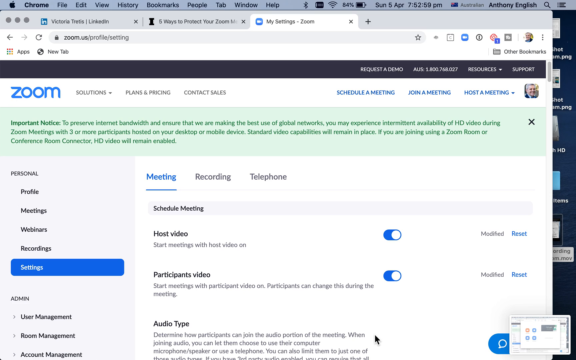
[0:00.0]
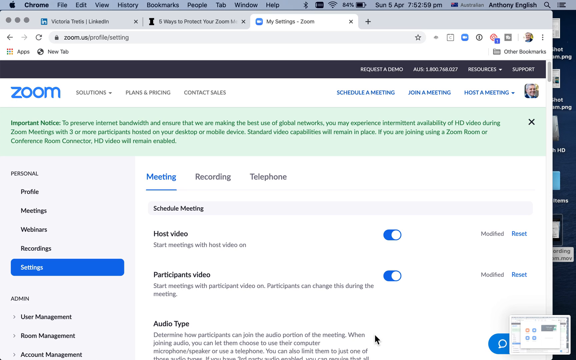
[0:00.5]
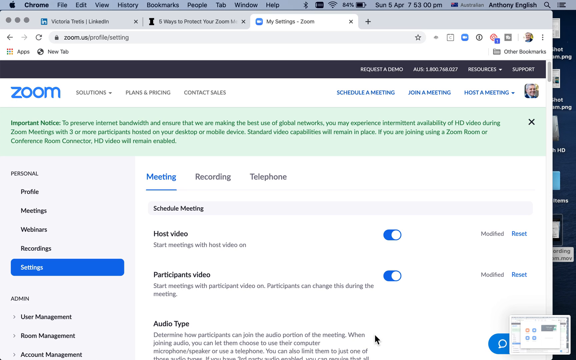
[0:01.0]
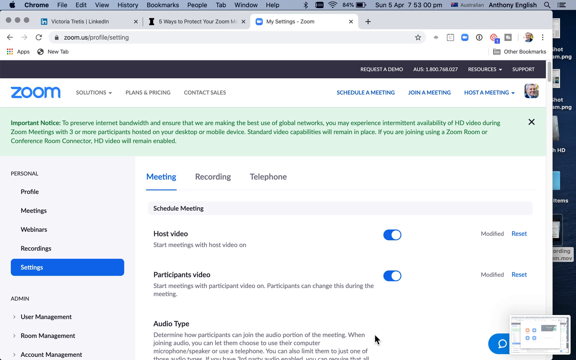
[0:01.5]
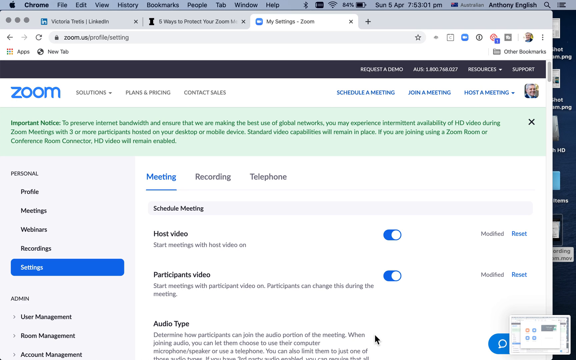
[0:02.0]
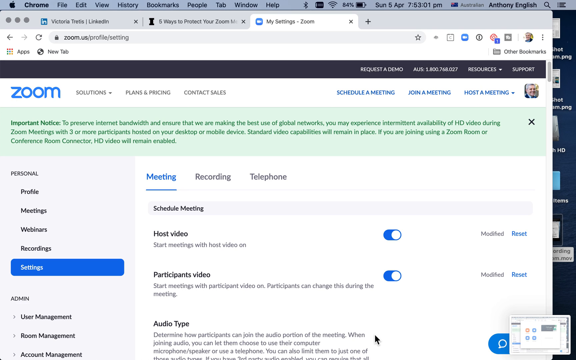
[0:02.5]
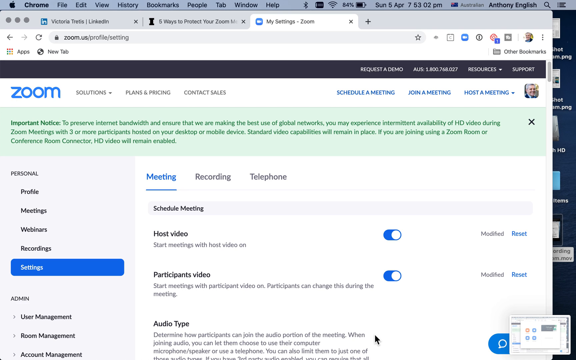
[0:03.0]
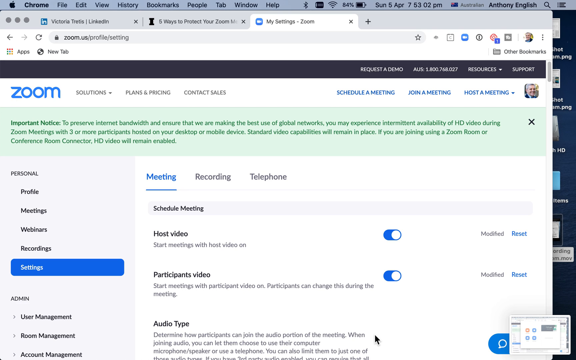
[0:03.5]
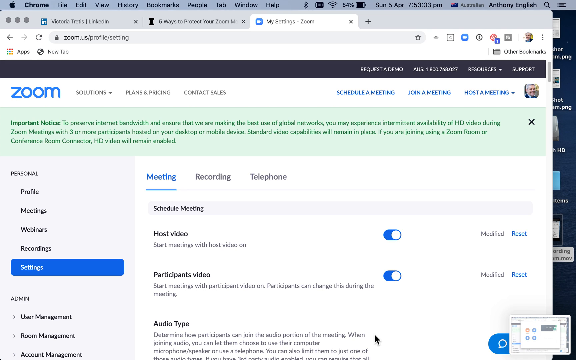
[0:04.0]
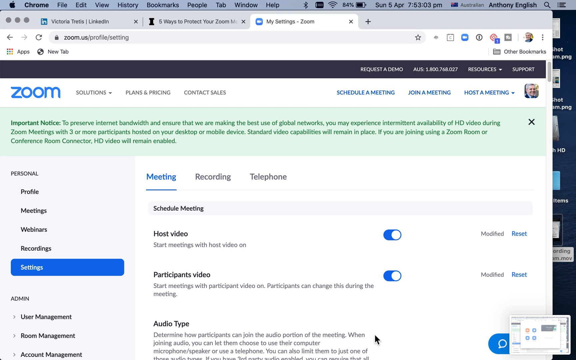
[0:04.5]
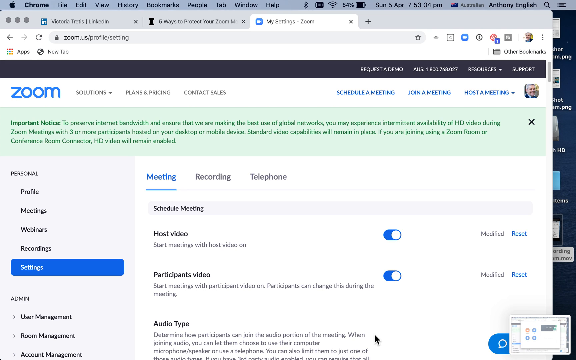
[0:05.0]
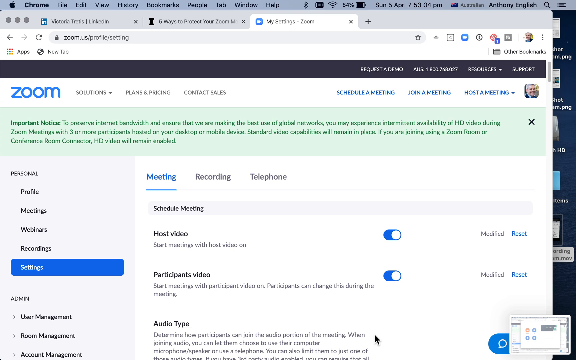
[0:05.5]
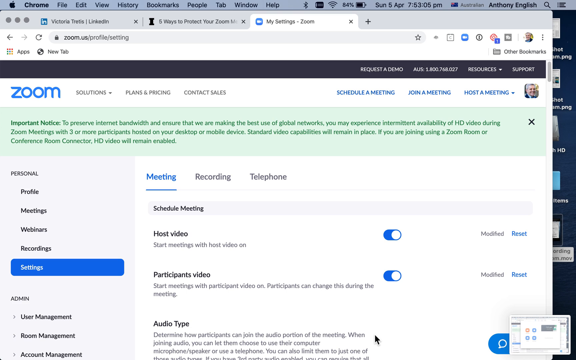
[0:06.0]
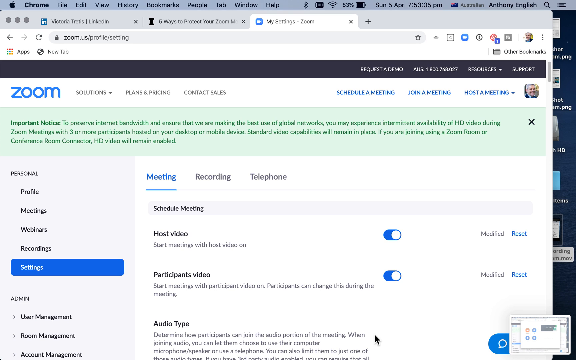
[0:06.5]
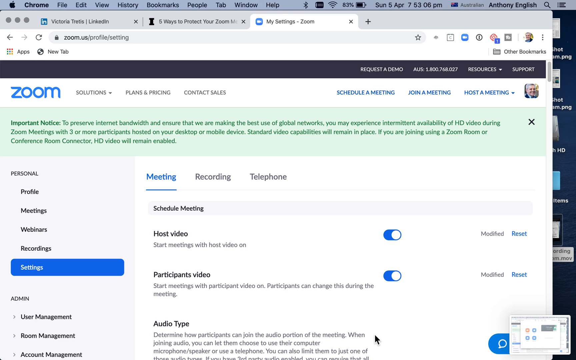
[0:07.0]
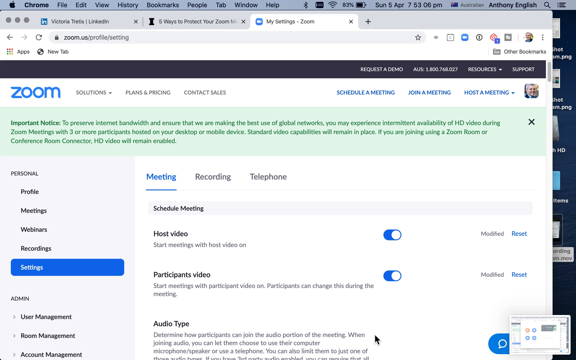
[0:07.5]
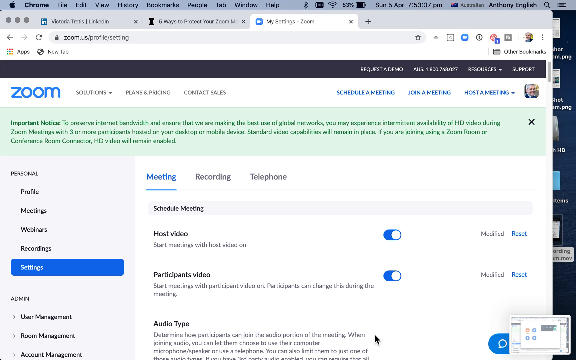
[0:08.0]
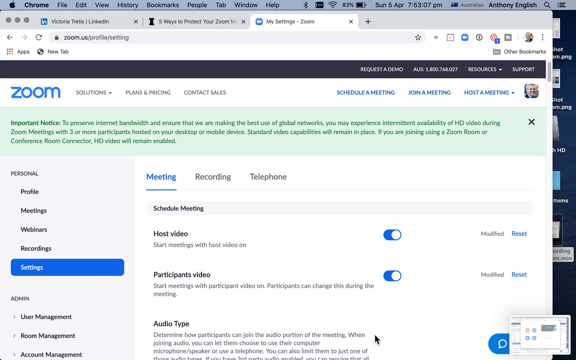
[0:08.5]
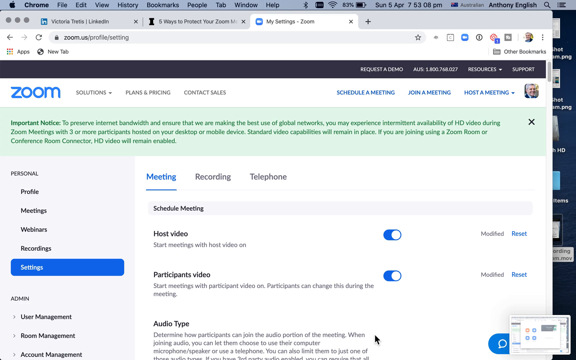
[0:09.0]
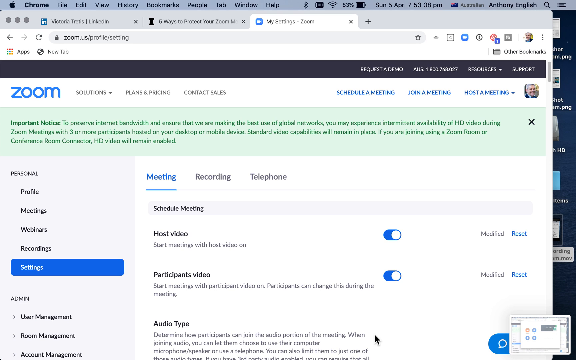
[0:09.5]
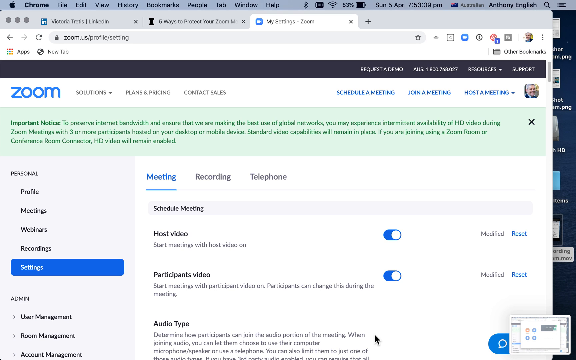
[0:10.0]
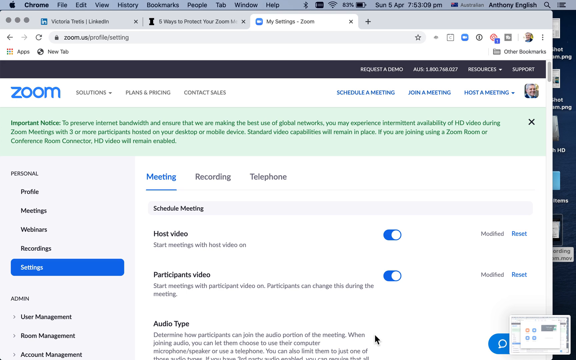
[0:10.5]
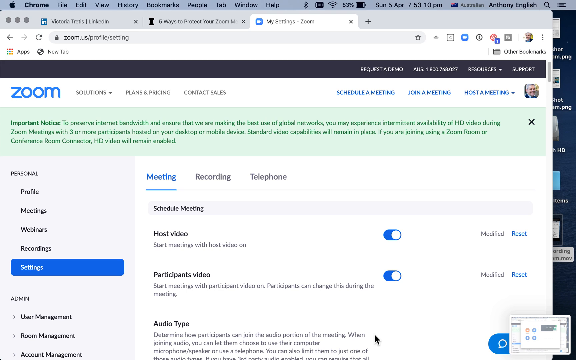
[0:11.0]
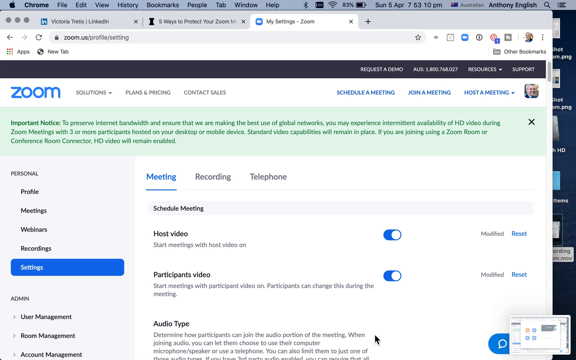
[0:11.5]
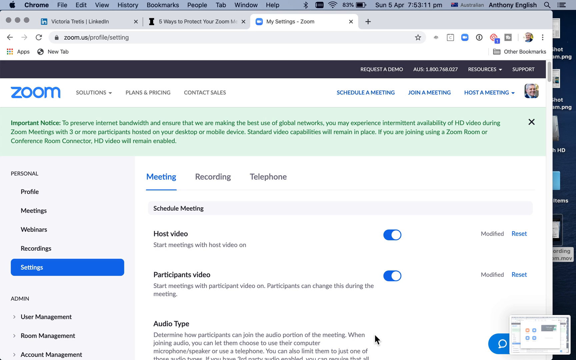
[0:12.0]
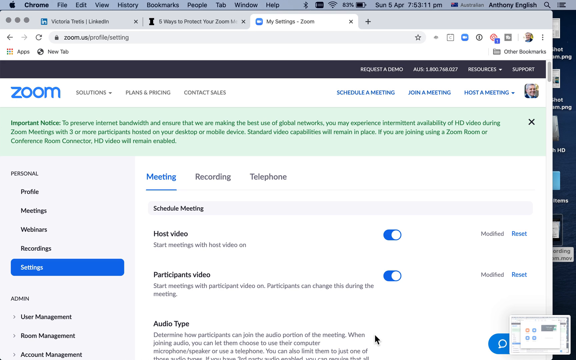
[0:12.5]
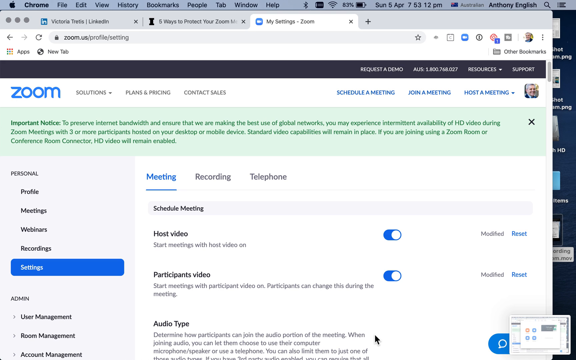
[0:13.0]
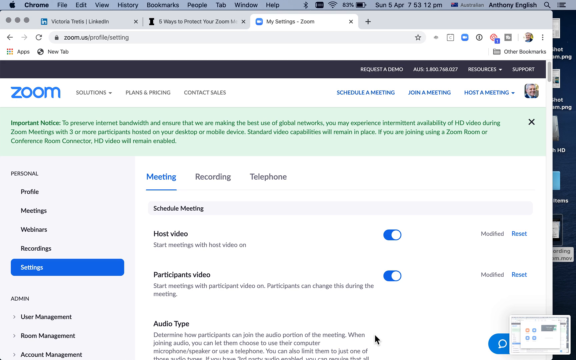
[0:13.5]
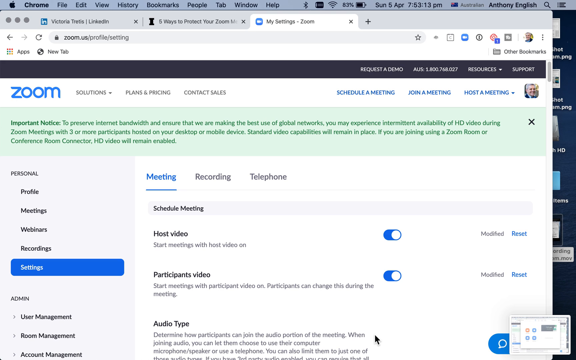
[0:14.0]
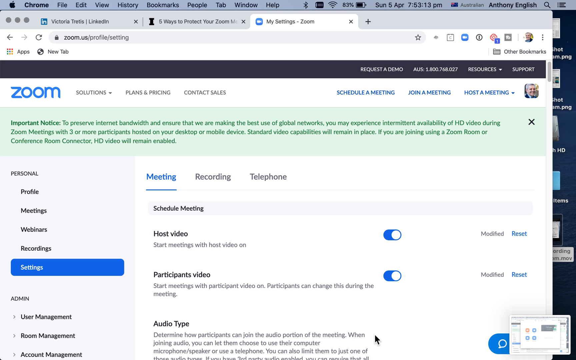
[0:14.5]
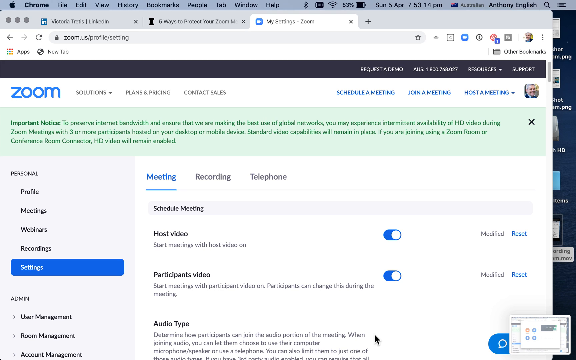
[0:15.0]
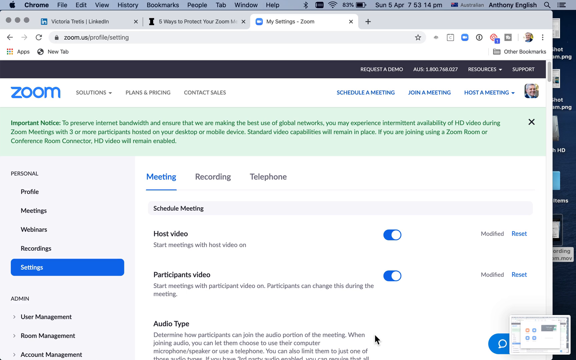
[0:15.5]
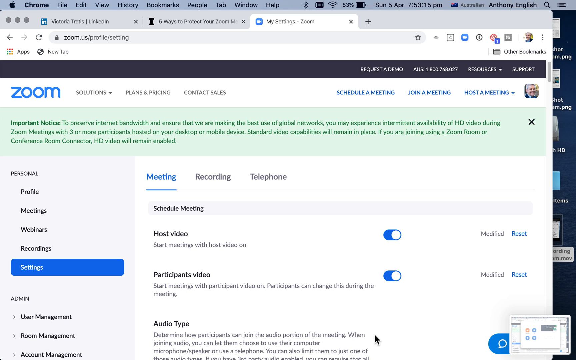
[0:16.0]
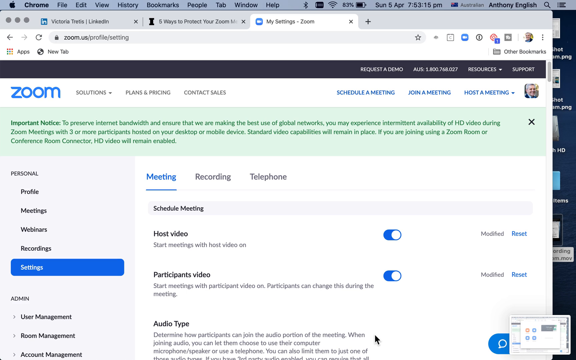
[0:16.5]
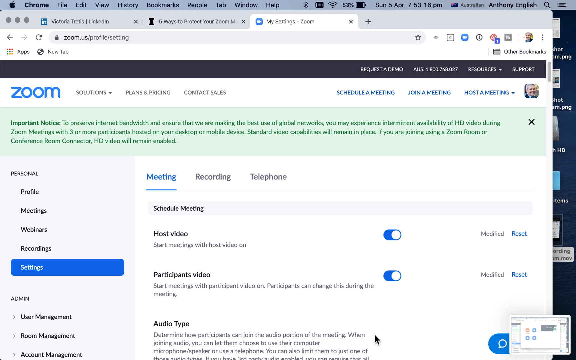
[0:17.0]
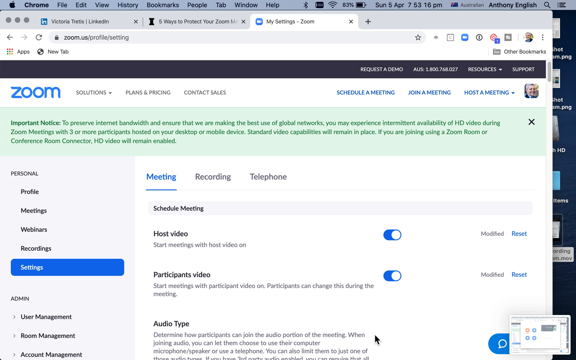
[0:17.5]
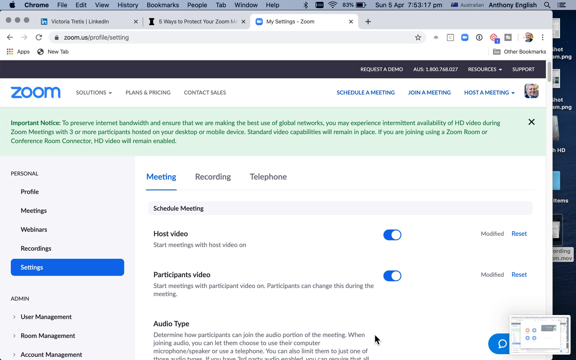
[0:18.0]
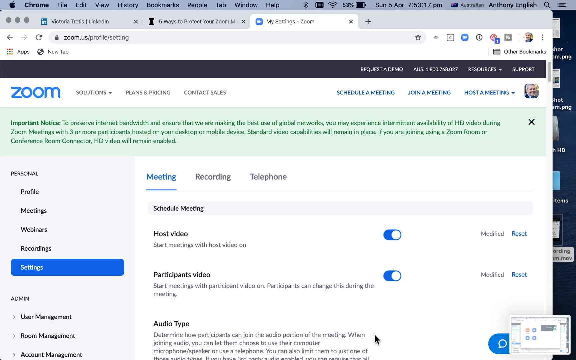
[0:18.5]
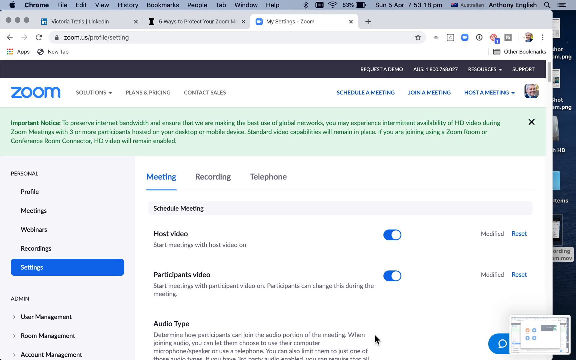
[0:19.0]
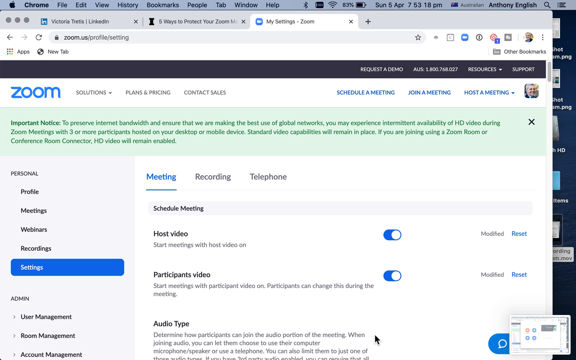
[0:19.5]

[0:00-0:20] The video appears to show the steps for connecting to a Zoom meeting on a computer. A computer and writing are visible on the screen. No people, kids or animals appear.